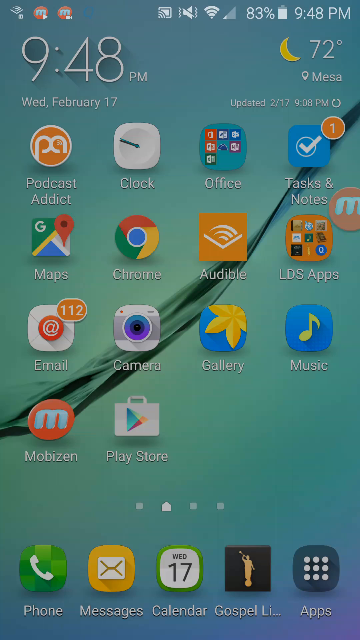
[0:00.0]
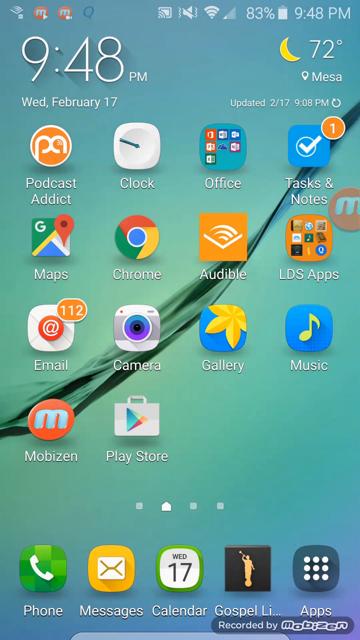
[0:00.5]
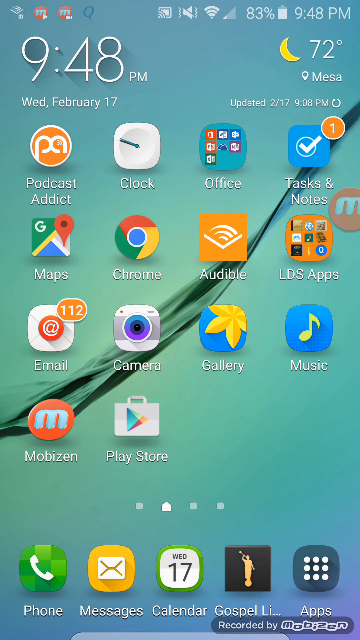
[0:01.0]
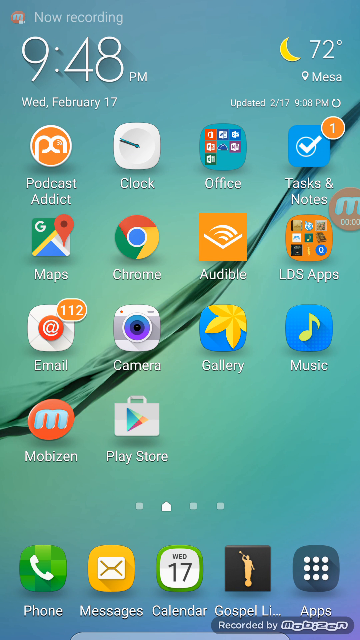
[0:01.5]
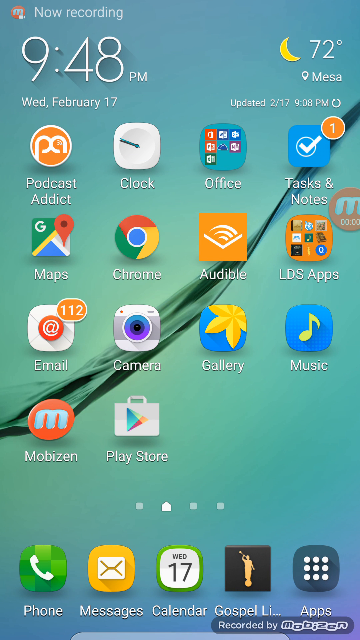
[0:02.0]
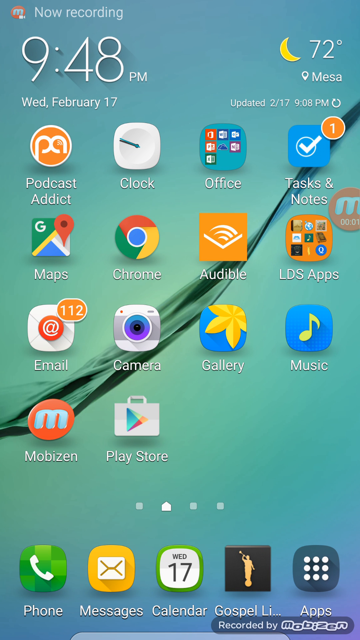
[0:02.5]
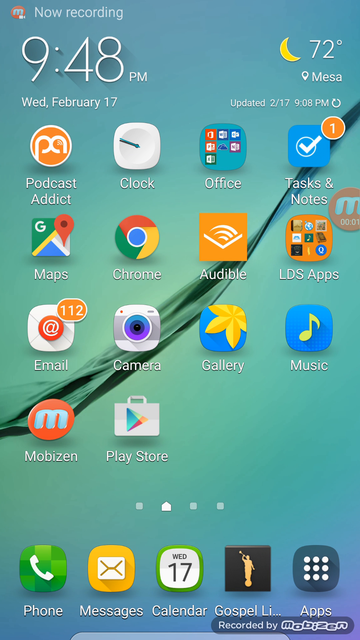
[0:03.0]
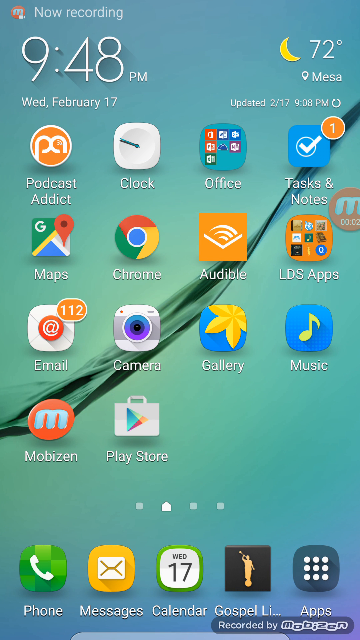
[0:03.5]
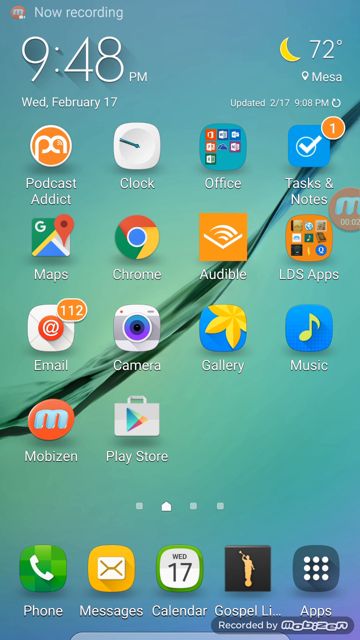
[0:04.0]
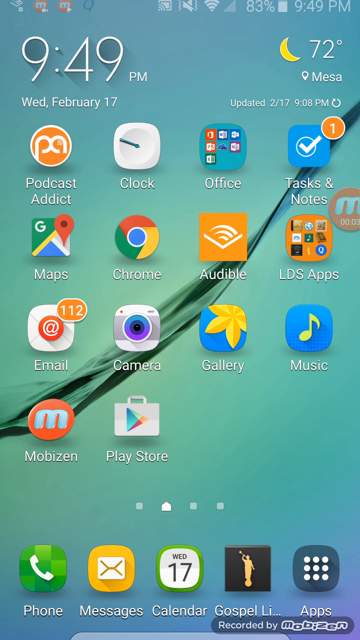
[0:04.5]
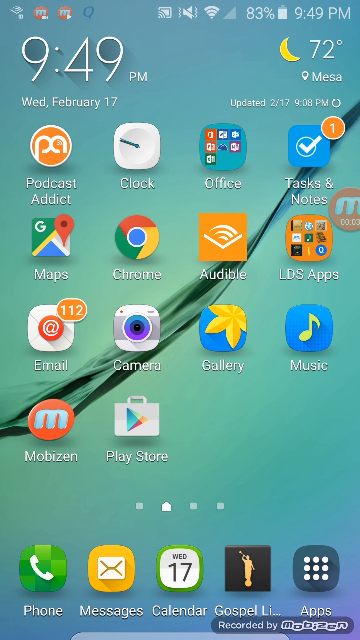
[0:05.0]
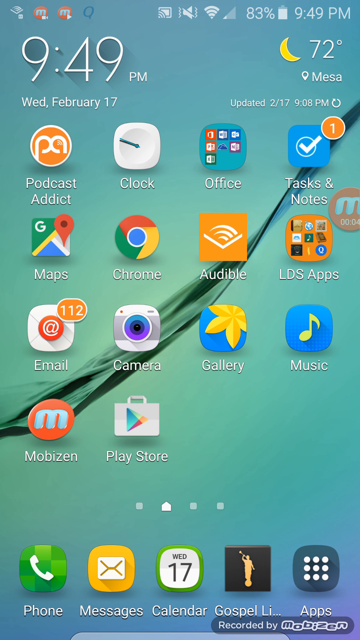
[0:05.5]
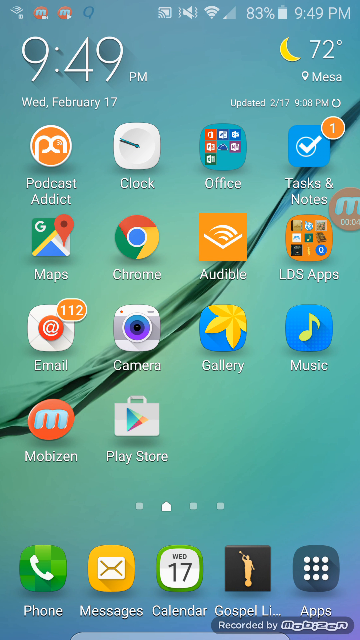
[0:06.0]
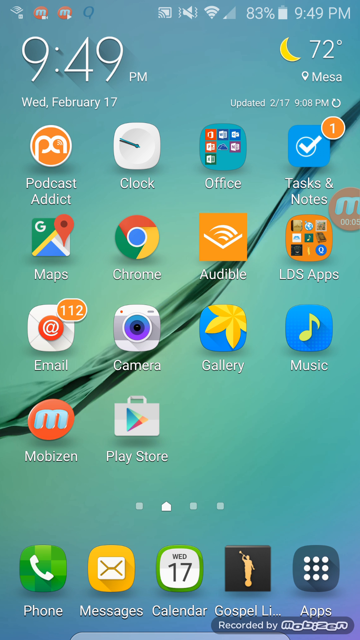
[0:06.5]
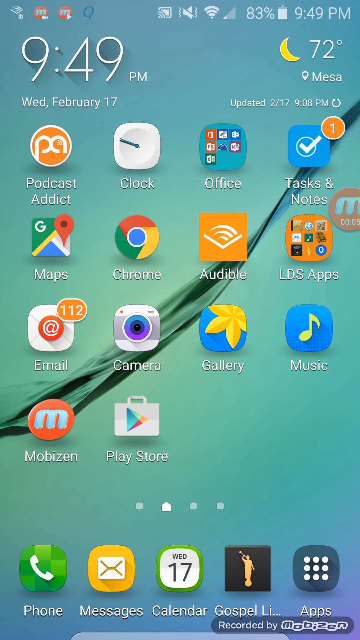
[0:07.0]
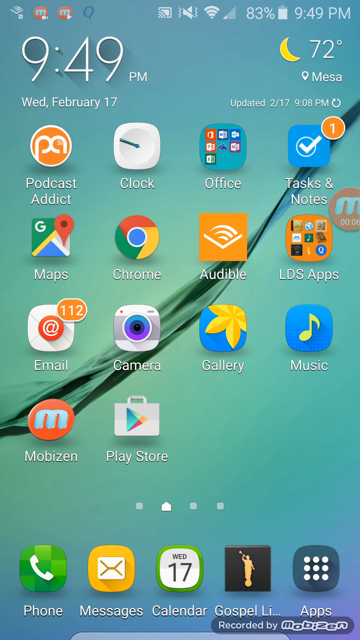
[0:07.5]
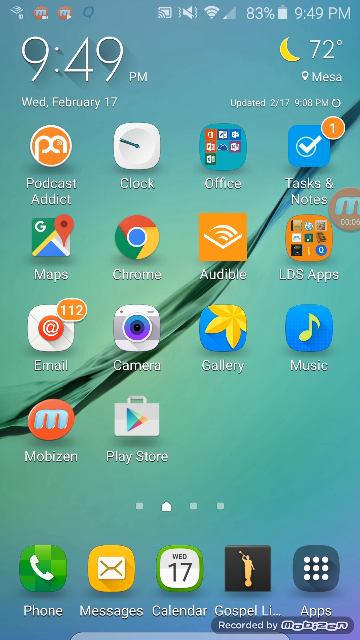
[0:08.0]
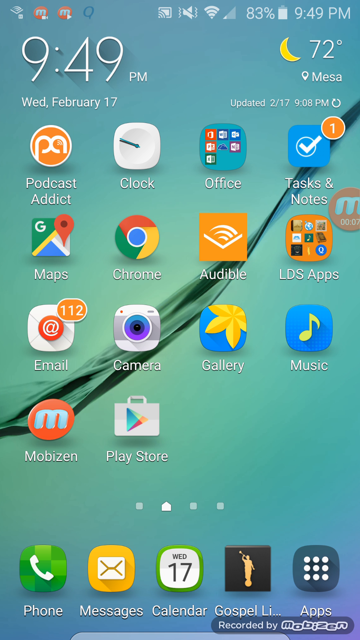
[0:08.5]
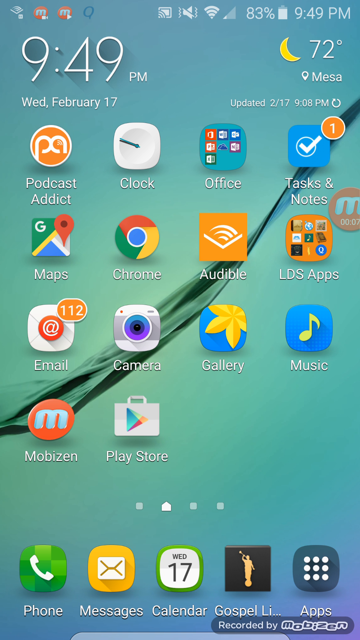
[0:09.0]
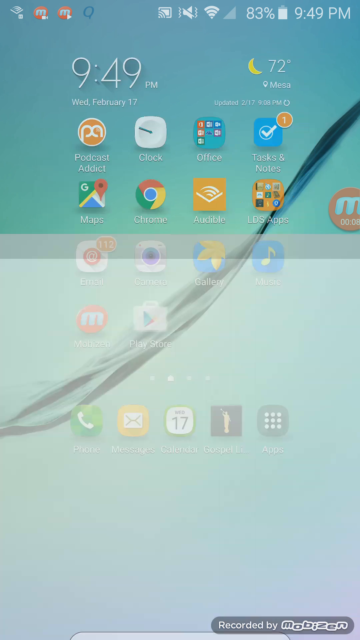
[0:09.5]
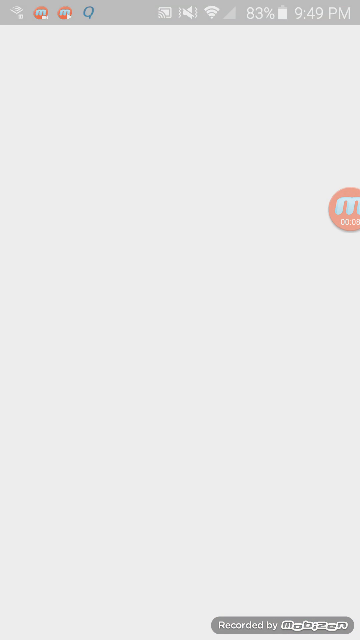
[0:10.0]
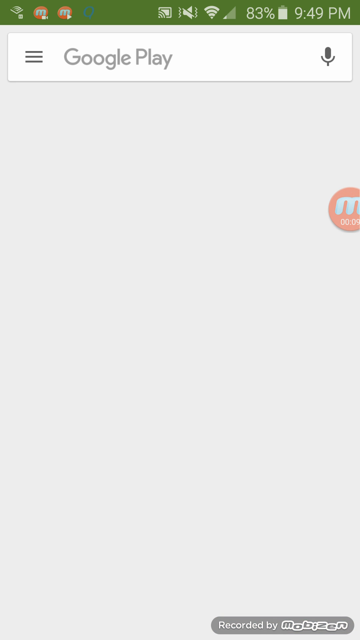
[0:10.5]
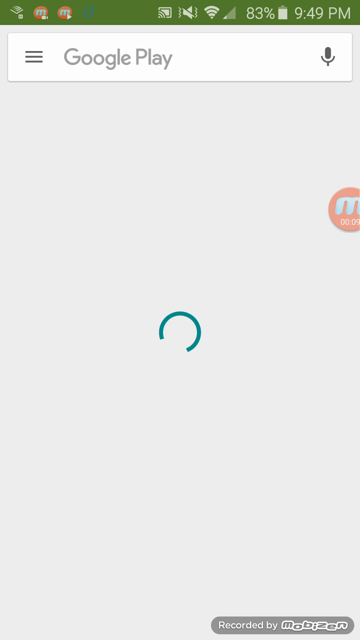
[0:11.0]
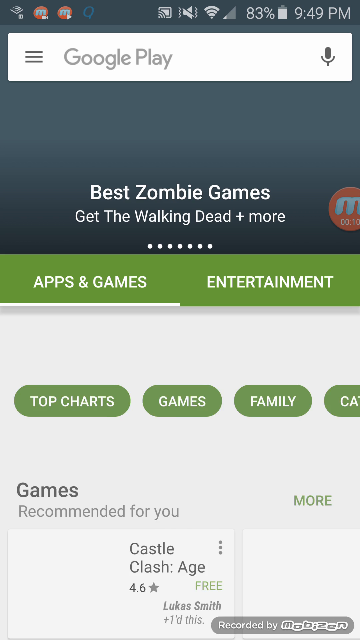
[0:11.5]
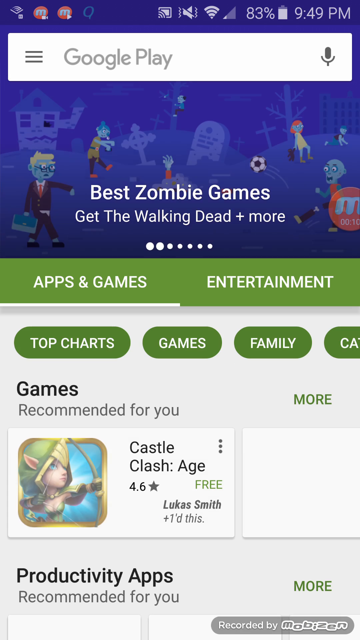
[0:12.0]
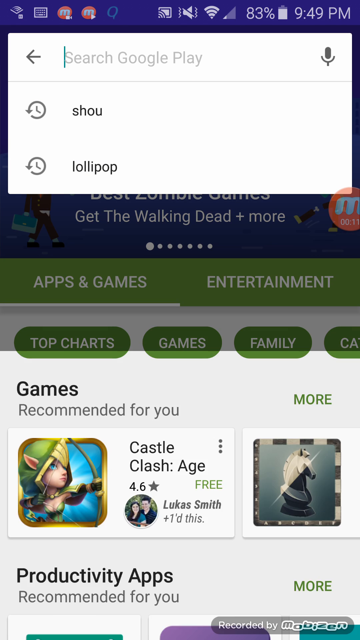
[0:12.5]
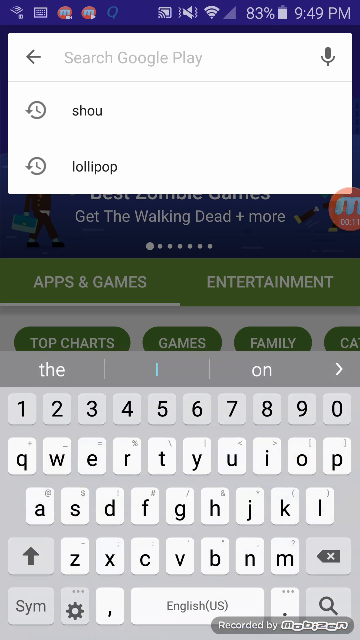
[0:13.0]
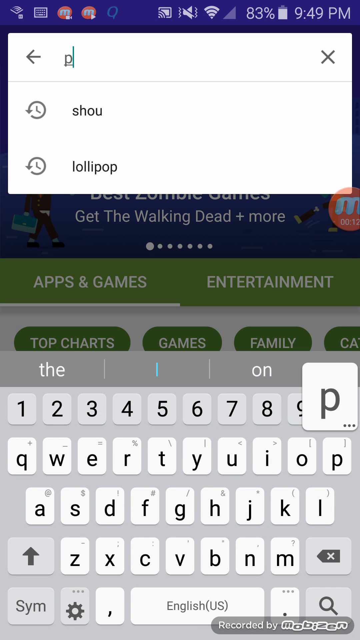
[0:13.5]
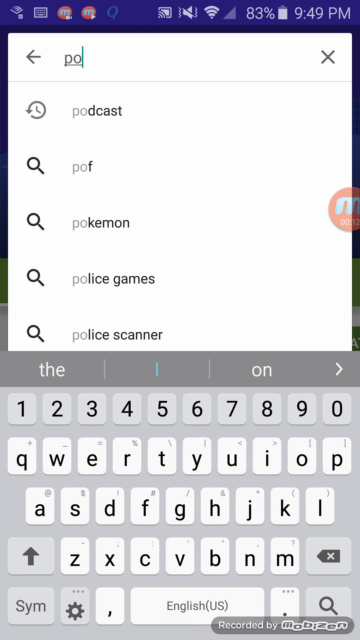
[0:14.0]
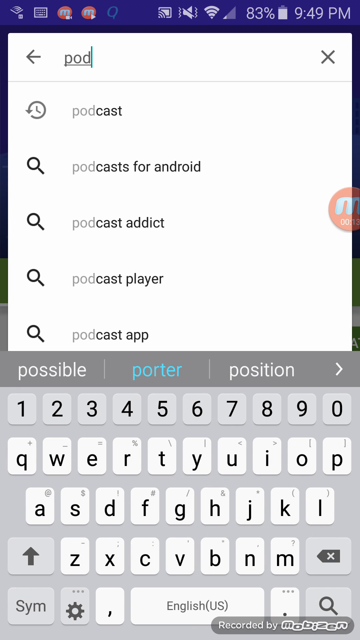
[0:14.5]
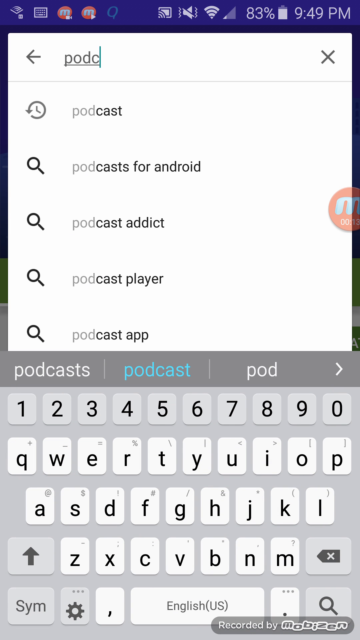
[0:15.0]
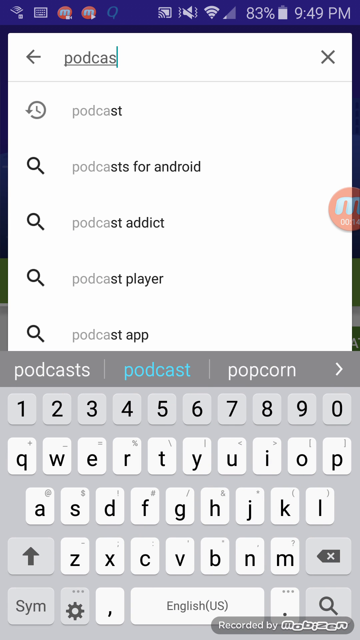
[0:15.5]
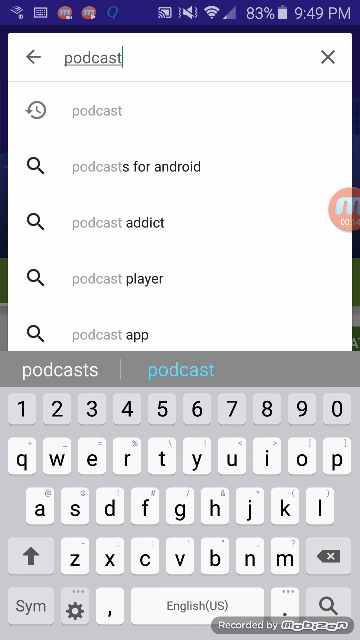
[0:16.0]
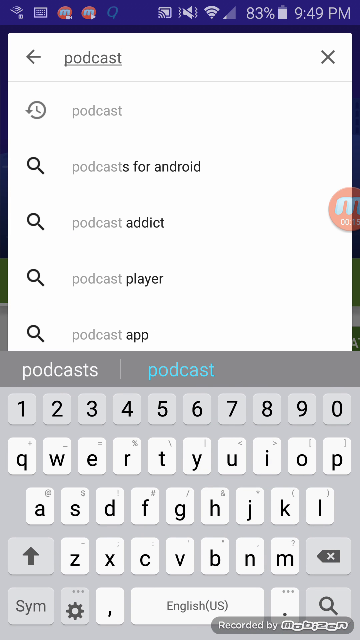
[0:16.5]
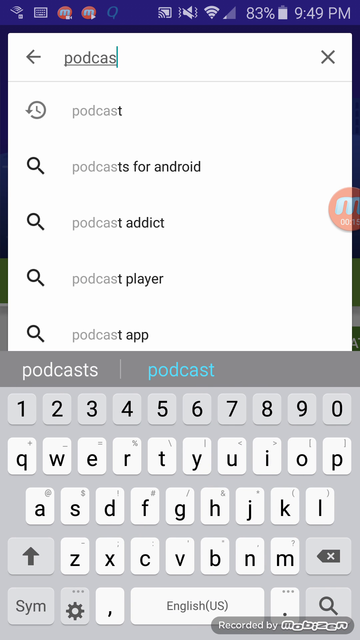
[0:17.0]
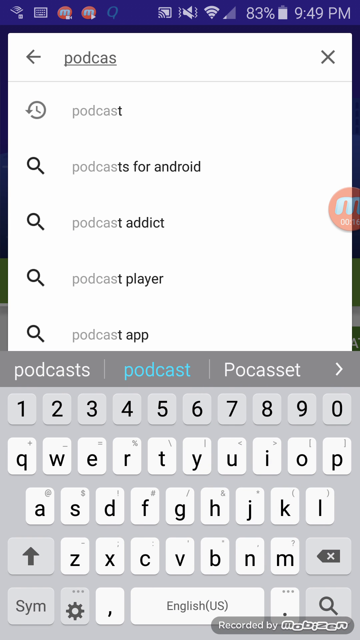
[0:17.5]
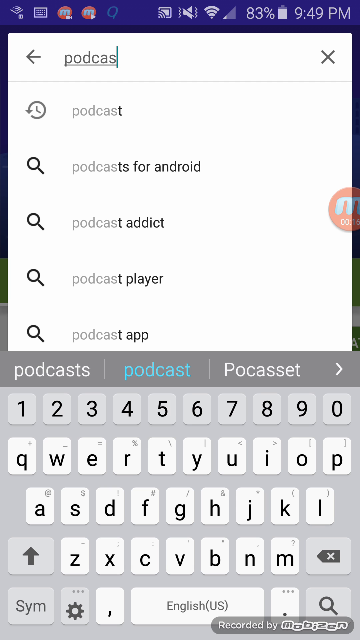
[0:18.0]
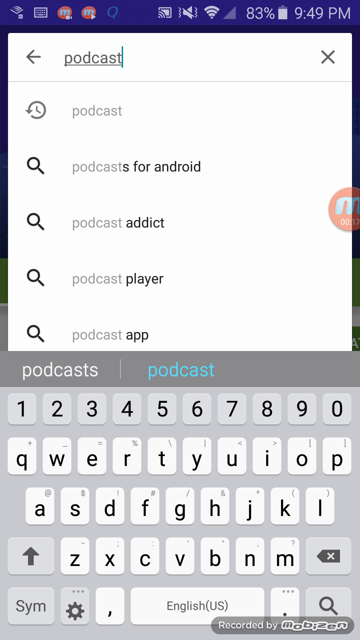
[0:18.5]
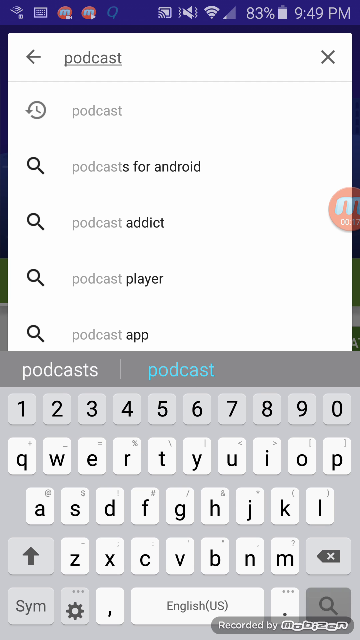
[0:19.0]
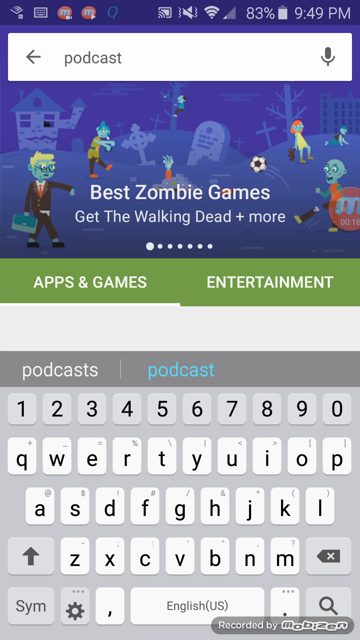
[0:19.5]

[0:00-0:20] A smartphone screen is being screen recorded, with "now recording" shown in the upper left corner. The top of the home screen shows the time, 9.48 PM, and the forecast, 72 degrees. Below that are several apps and shortcuts, including Google Maps, Google Chrome, Audible, the Google Play Store, what looks like an e-mail app, the Podcast Addict app, a shortcut to the clock, a folder labeled "Office" containing several icons, and shortcuts for the camera and gallery. The screen then changes to the Google Play Store, where the person types "podcast" into the search box at the very top, apparently searching for podcasts.